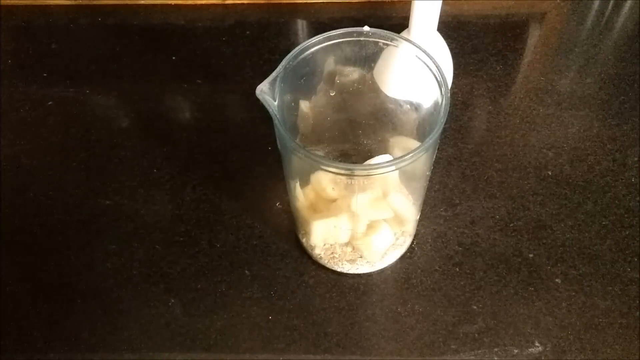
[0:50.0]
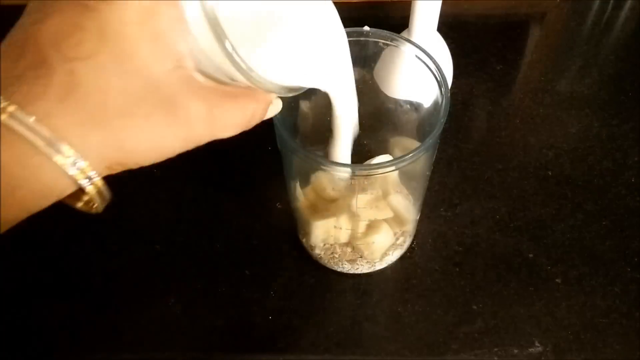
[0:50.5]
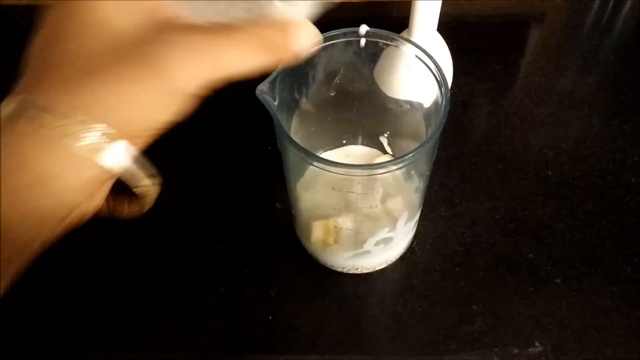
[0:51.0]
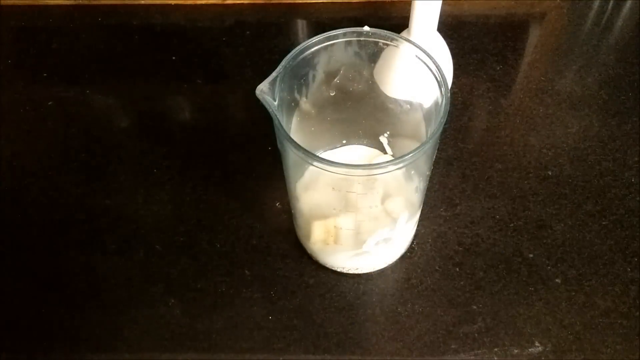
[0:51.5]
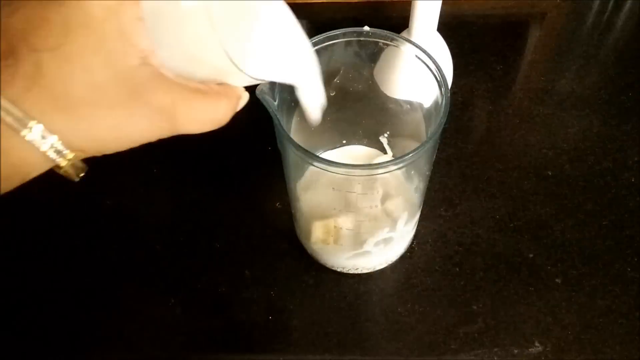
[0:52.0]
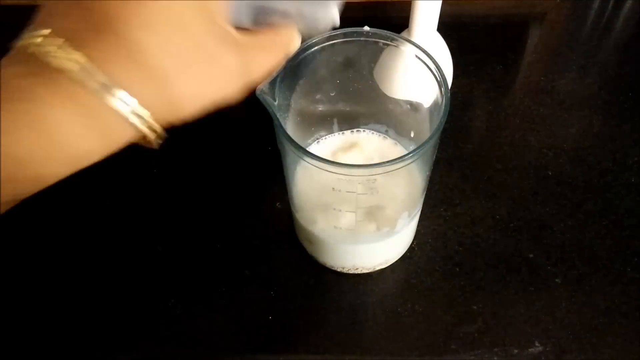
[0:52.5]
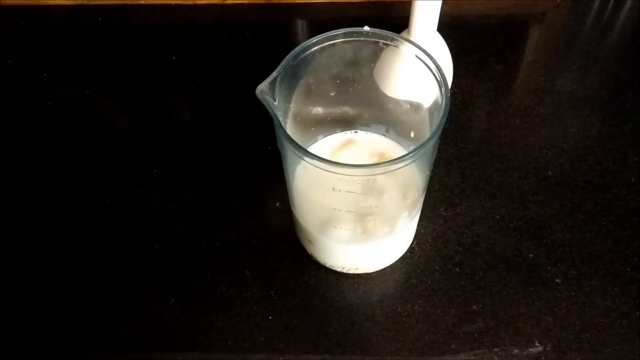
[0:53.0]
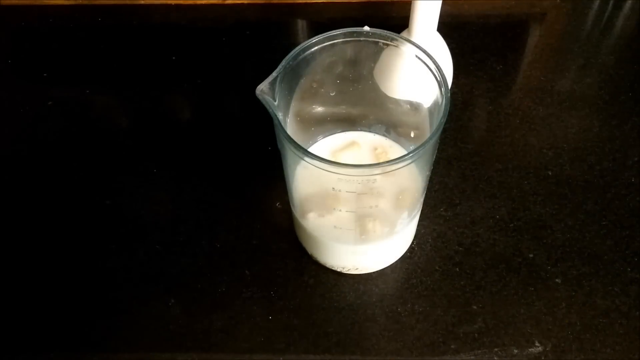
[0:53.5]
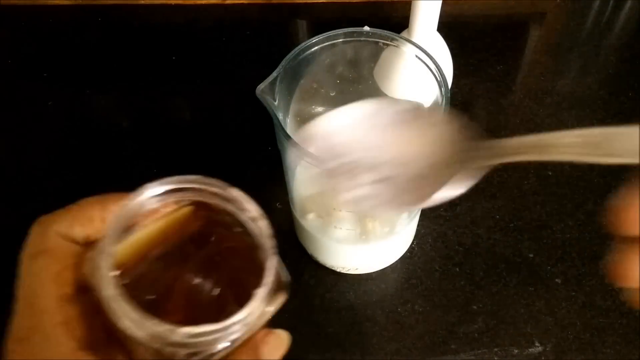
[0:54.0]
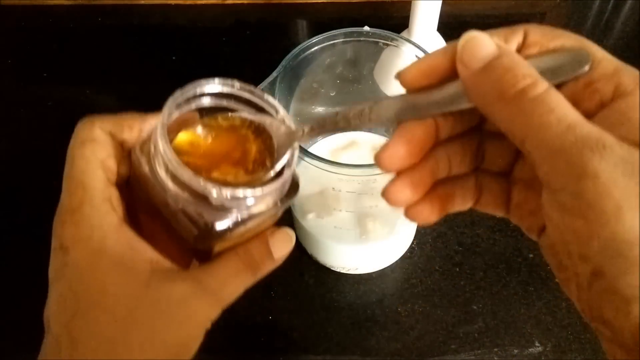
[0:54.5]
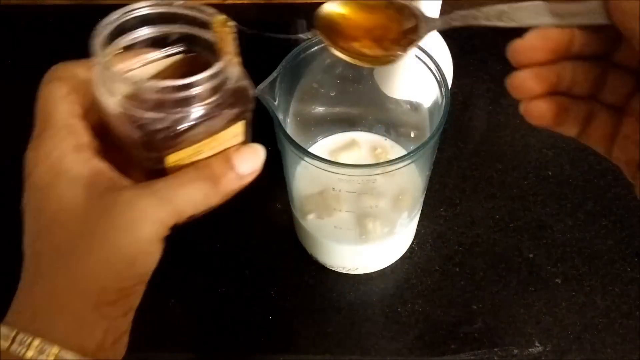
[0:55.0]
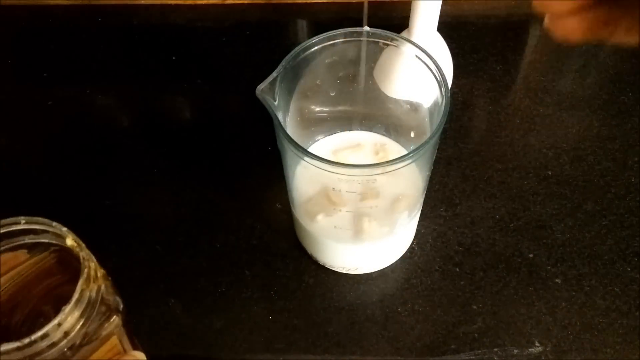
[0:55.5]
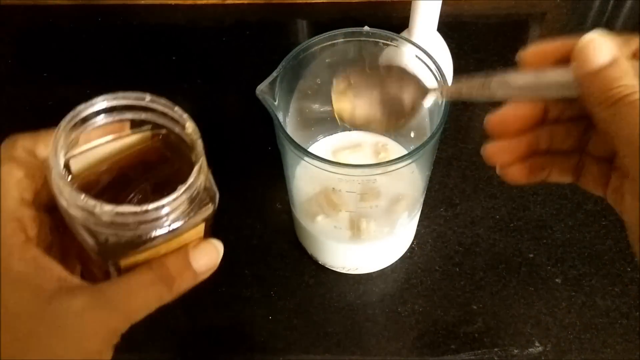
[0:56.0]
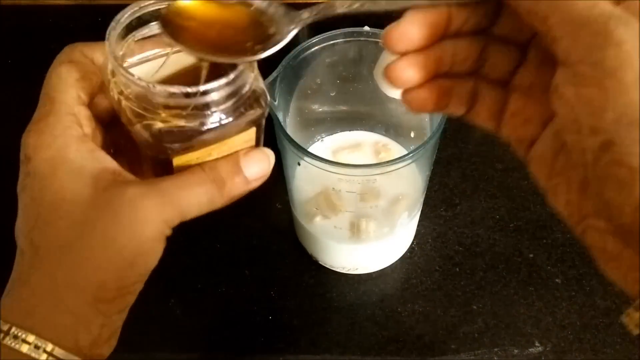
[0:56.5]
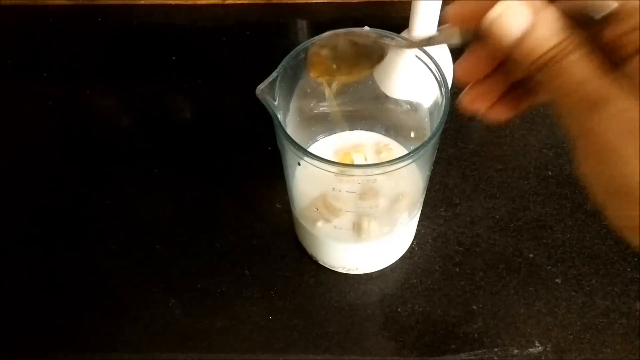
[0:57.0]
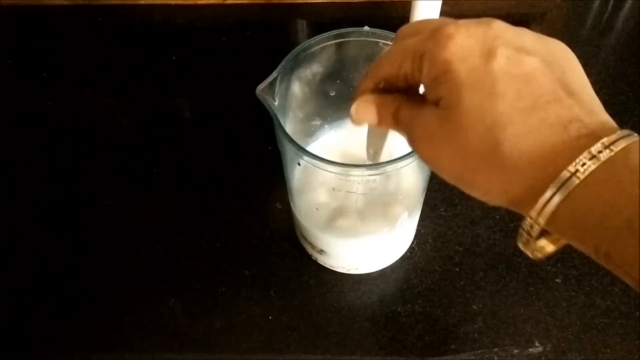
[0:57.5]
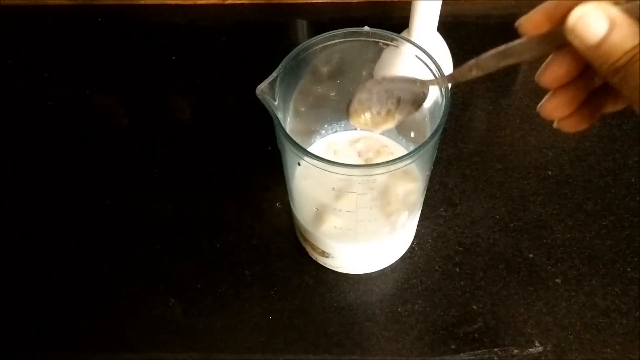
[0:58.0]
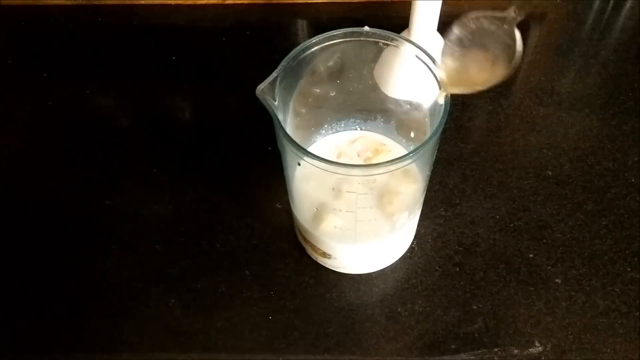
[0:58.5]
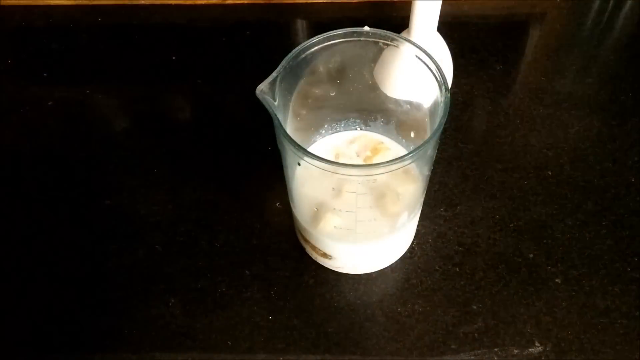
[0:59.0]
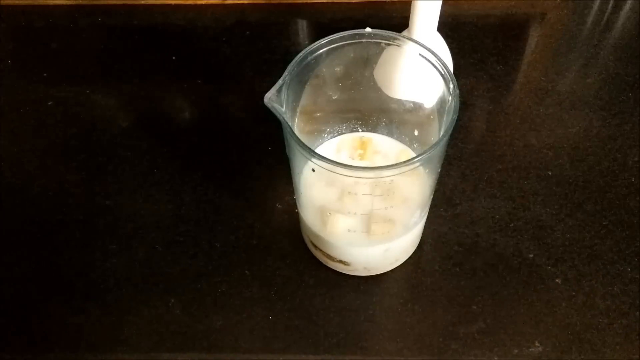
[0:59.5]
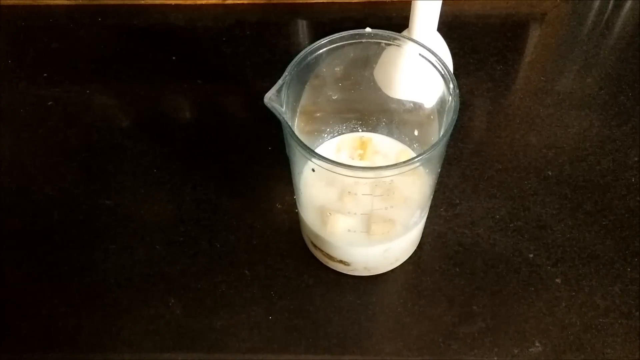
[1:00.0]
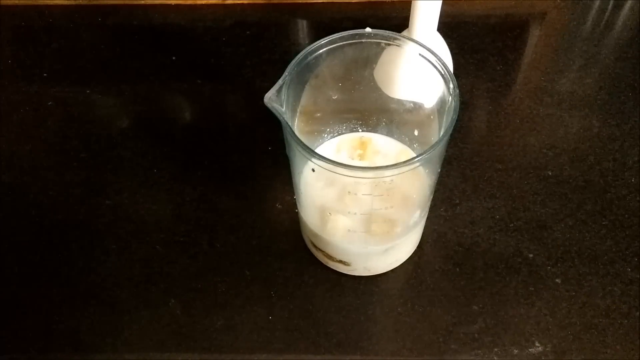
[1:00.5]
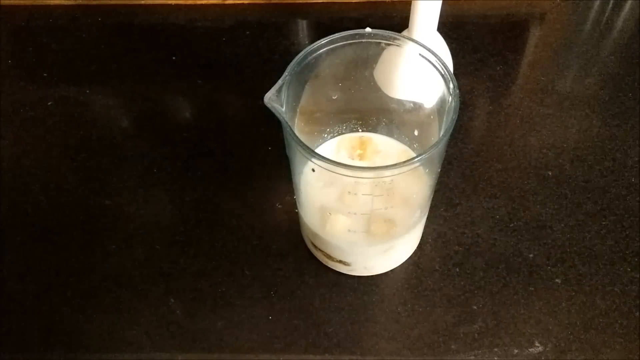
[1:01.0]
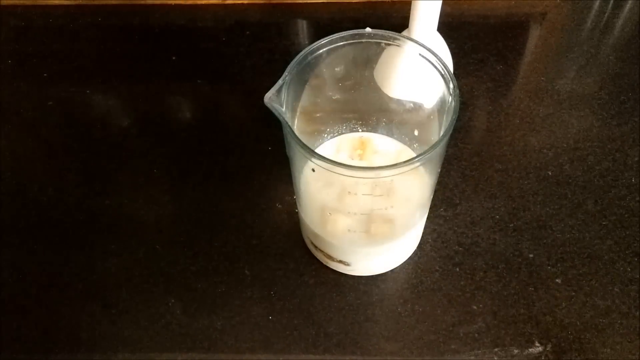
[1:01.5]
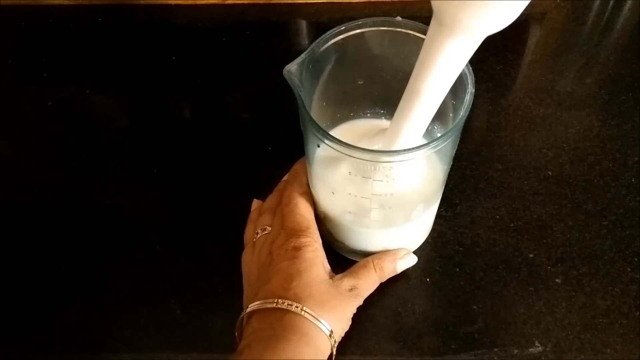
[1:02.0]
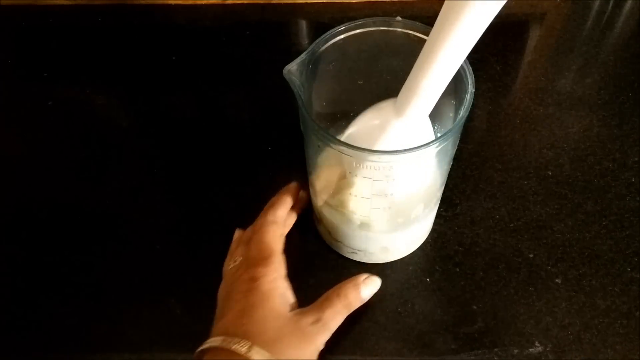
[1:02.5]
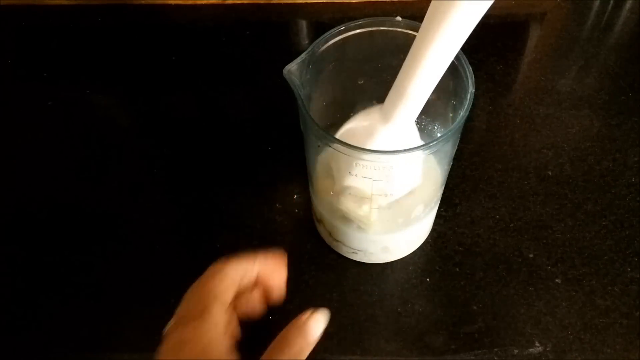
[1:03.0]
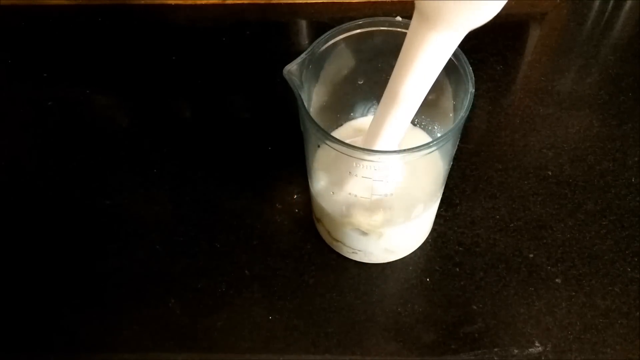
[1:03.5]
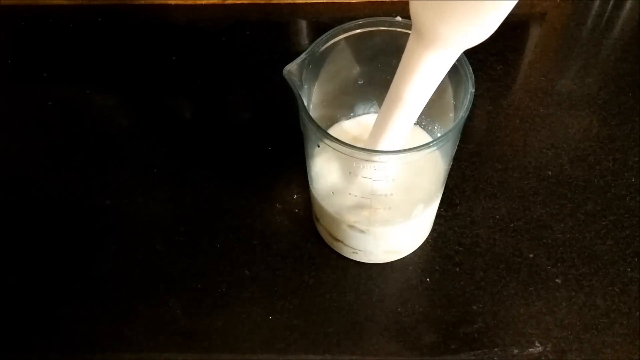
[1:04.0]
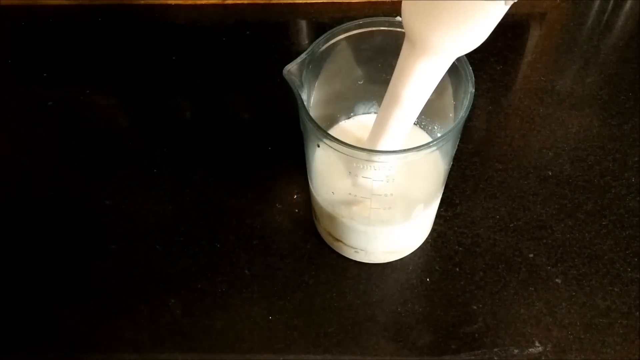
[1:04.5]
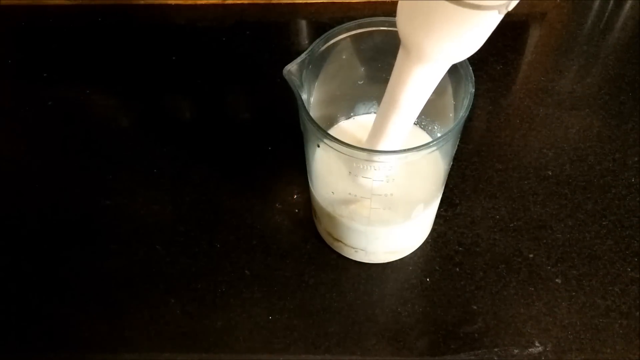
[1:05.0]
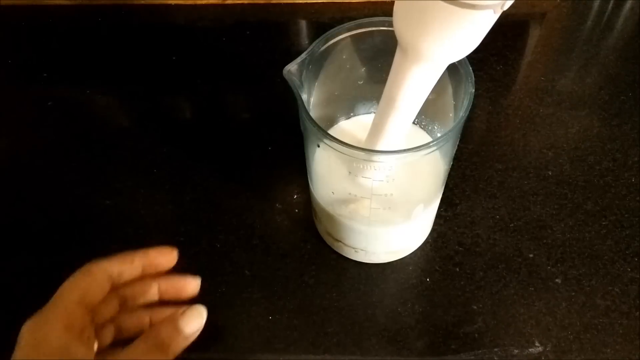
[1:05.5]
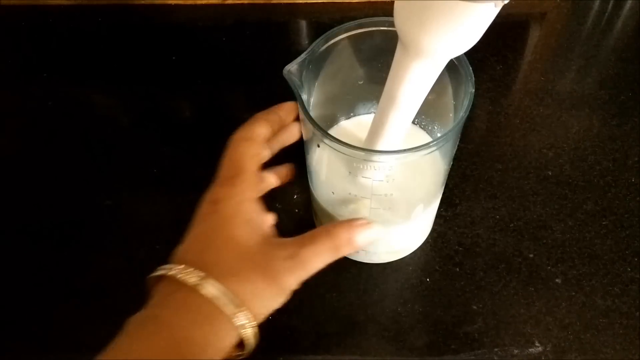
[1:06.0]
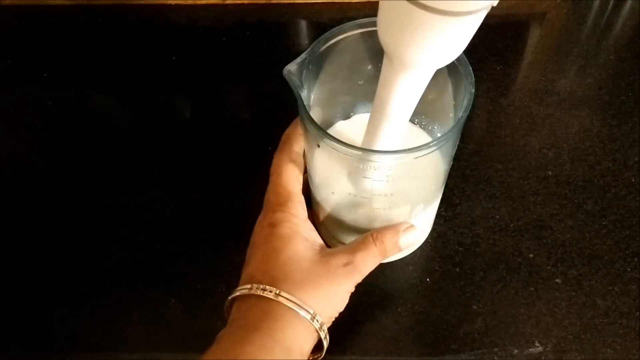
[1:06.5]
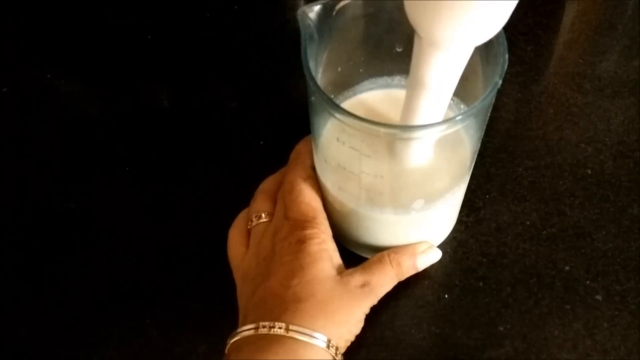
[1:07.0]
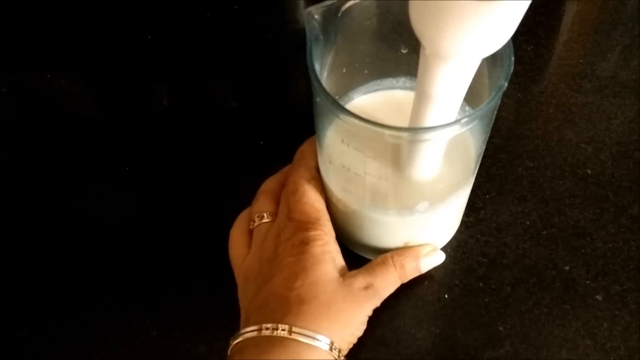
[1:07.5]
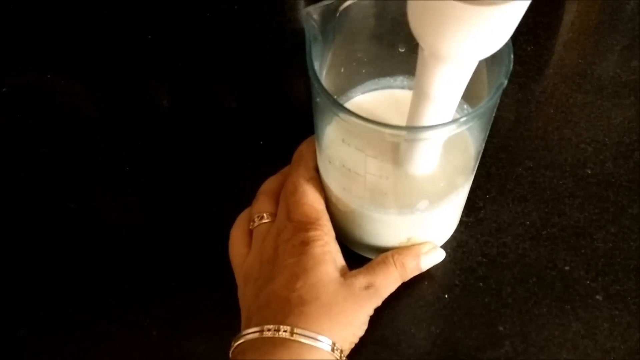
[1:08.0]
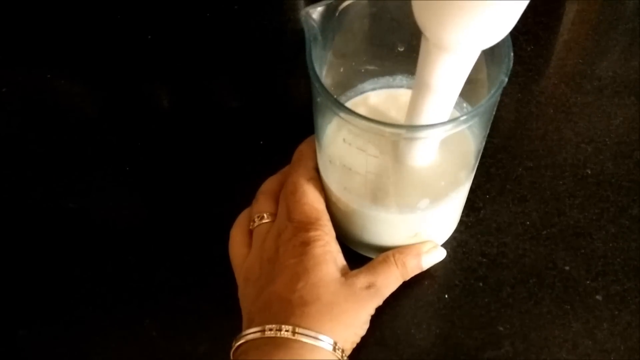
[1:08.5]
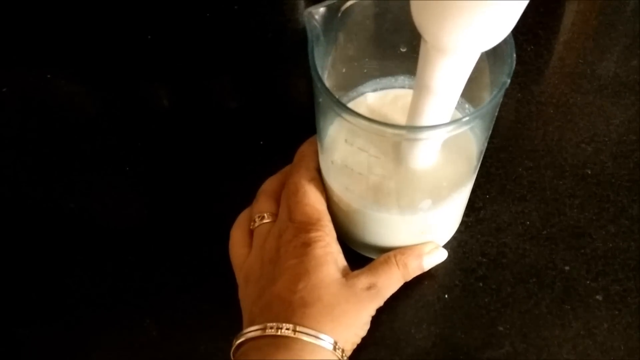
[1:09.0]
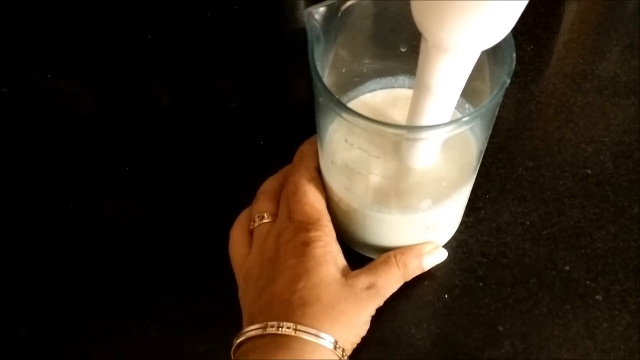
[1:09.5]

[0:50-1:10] A clear glass beaker with chunks of banana and some oats inside is on a shiny black kitchen surface that could be marble, with an electric mixer in the background. The woman adds what looks like cream from a small jar into the beaker, then what looks like maybe milk. She adds a tablespoon of maybe syrup, a brown, sticky sort of substance, and stirs it a little with a spoon. She then puts the electric mixer, which is white, inside the beaker, holds the beaker with her left hand and starts mixing slowly on the shiny black marble kitchen top. The mixture bubbles up and is now white.